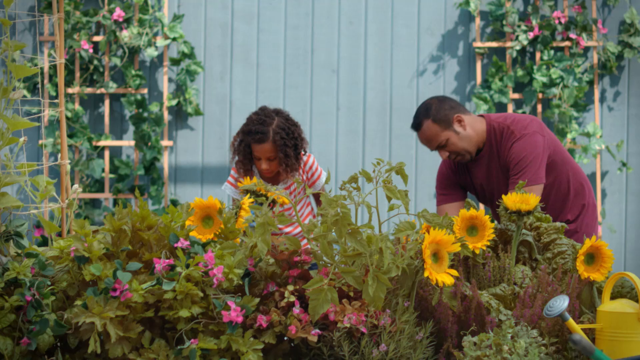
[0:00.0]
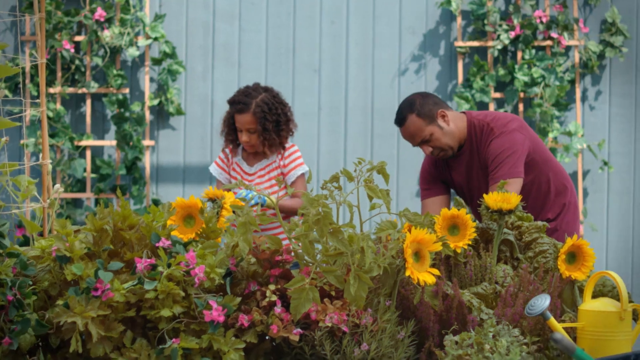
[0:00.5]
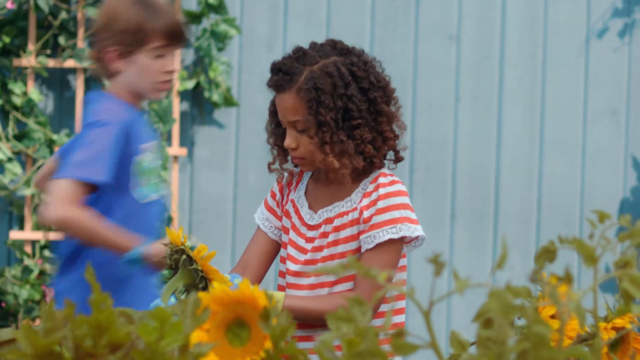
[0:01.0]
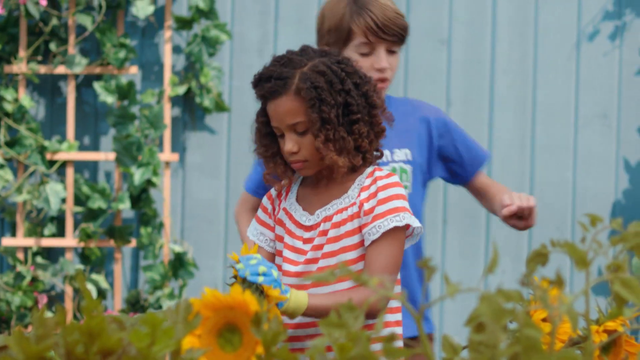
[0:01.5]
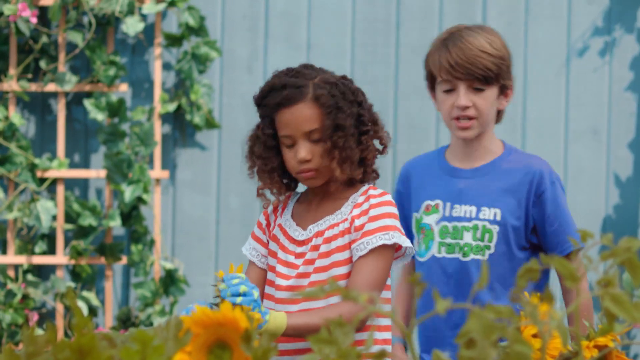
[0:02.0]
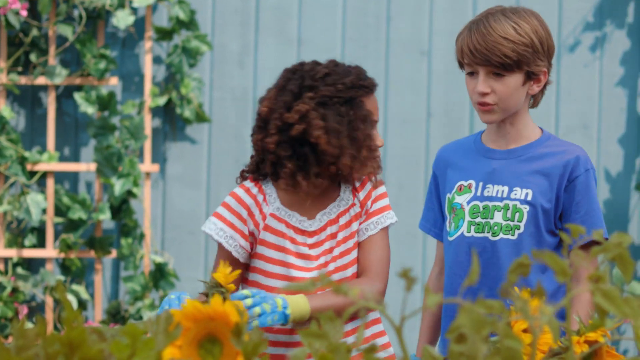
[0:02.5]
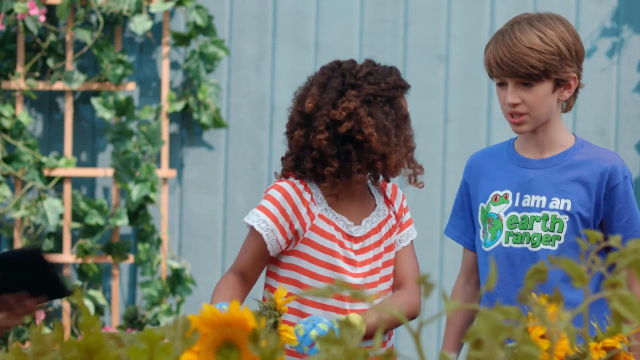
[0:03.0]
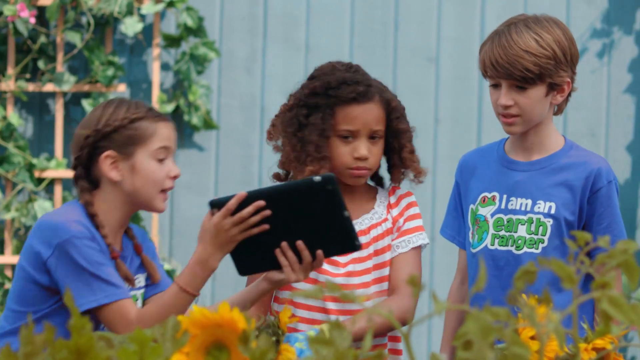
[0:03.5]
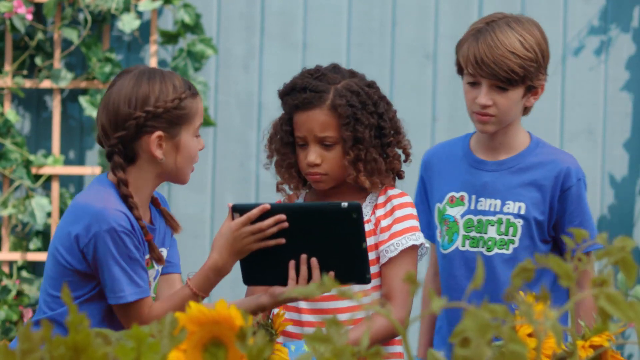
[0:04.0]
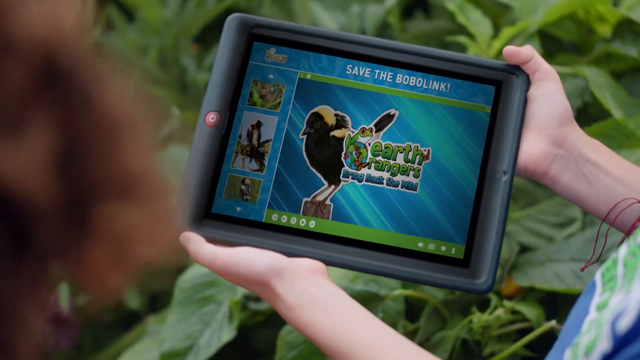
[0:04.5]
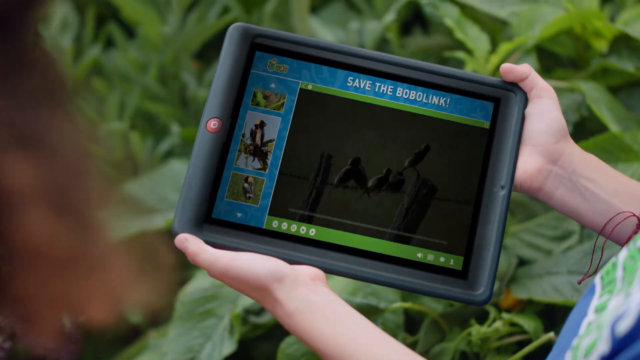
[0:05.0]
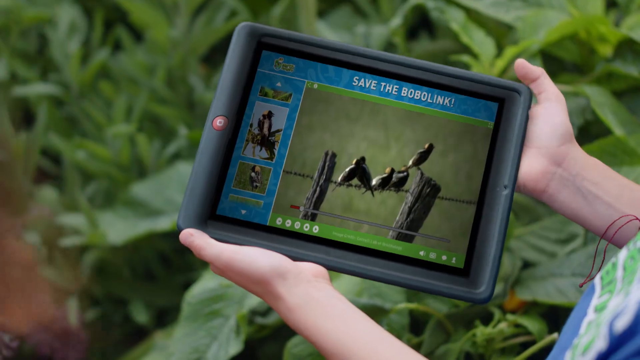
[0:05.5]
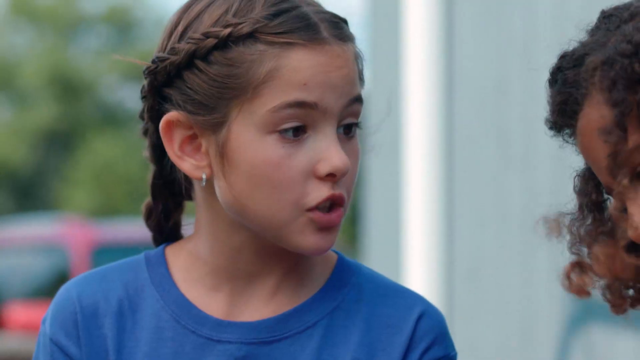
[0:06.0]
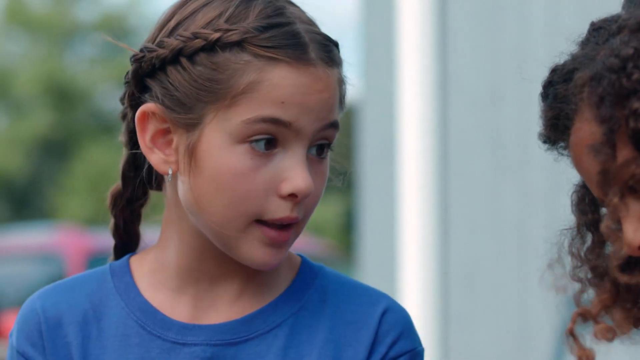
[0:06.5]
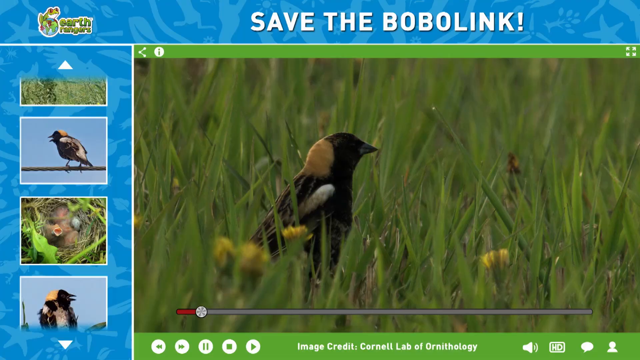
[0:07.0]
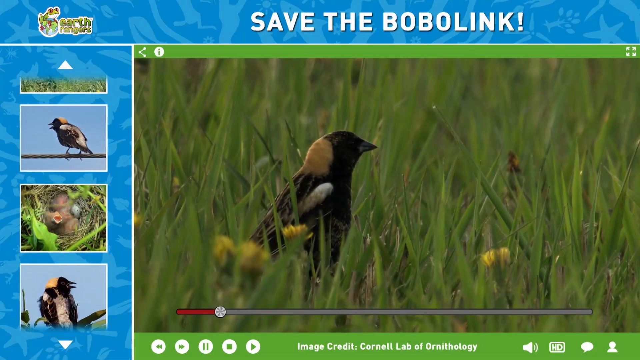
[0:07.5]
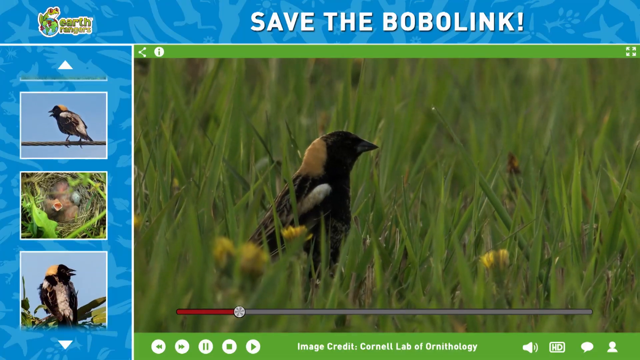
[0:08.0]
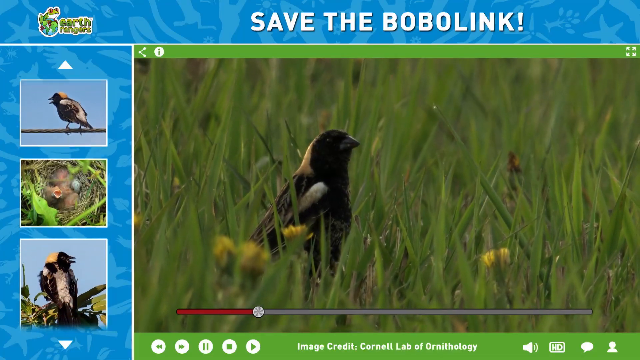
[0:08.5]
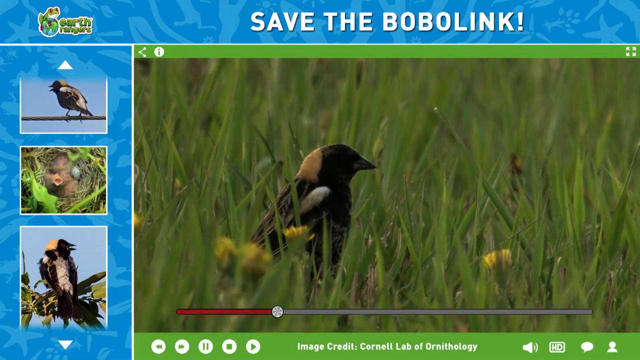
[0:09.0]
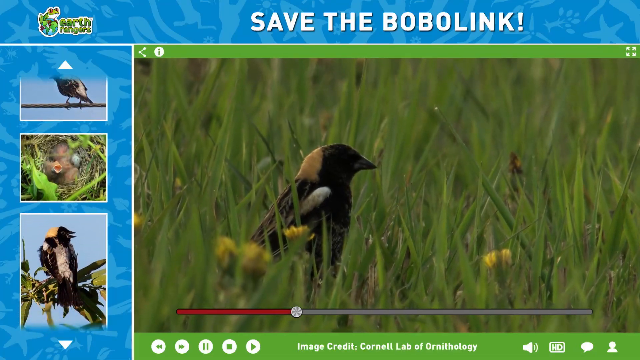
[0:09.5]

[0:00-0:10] The scene appears to be an outdoor garden, though it may be a set, given how clean it looks. A gray fence runs across the background, slotted all the way across and not see-through. There are two trellises, one on the left and one on the right, with plants growing up them, and in front there seem to be low sunflowers just starting to grow. Two people, apparently a younger girl on the left and a man with a darker olive skin complexion on the right, are doing something. A white boy runs up in the background, then another girl runs up, and then another girl runs up and looks at the other girl's iPad. They are looking at something called Save the Boba Link, apparently a type of bird, which is looking around.